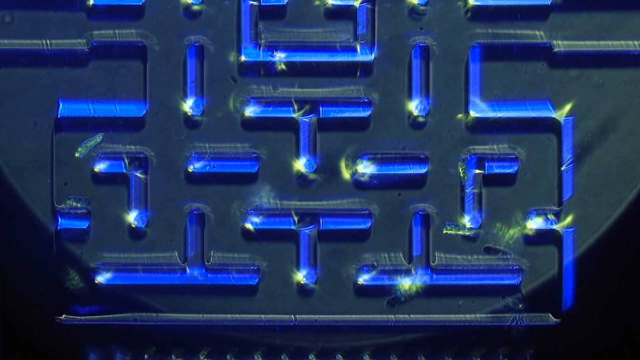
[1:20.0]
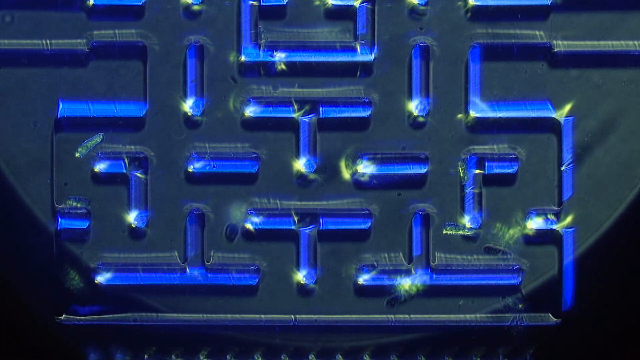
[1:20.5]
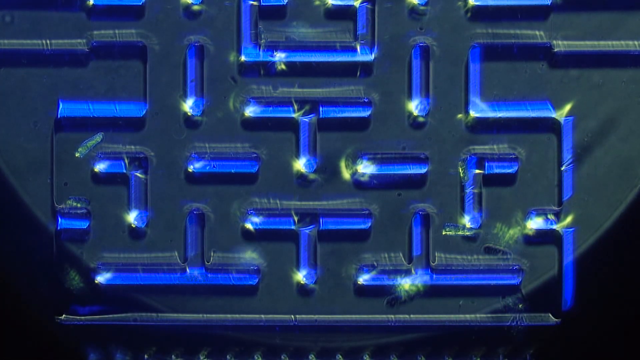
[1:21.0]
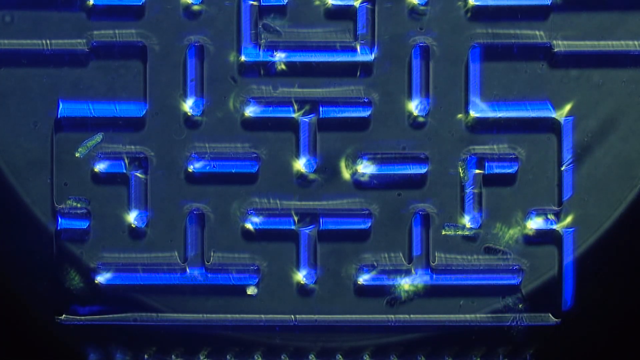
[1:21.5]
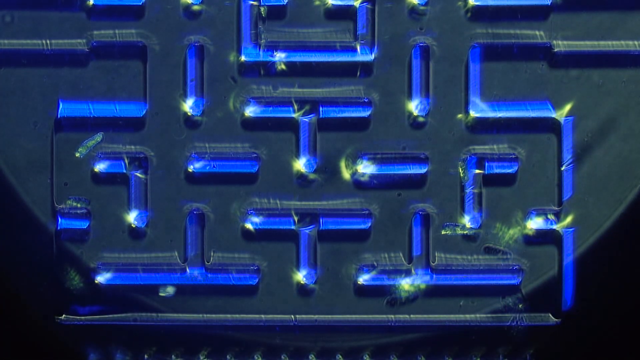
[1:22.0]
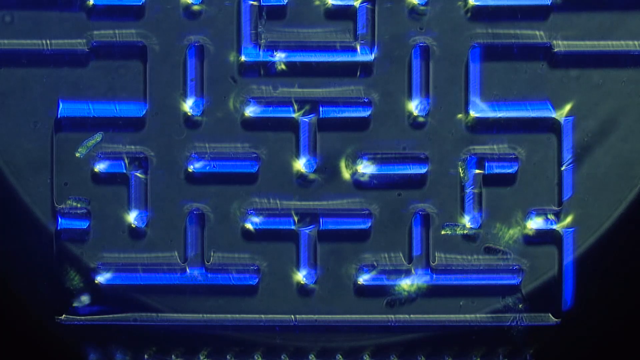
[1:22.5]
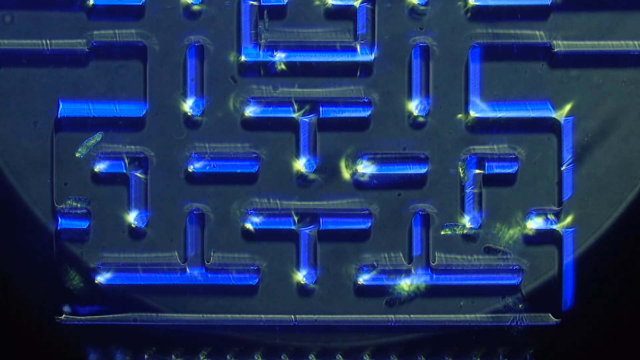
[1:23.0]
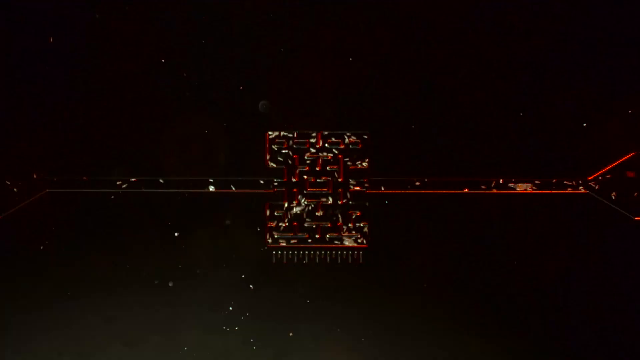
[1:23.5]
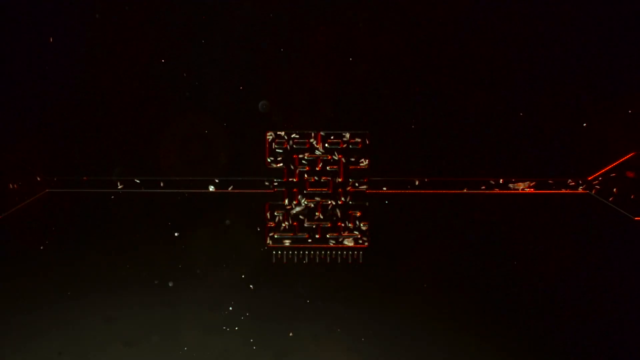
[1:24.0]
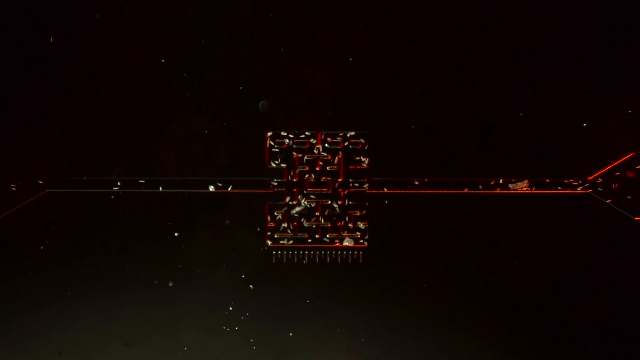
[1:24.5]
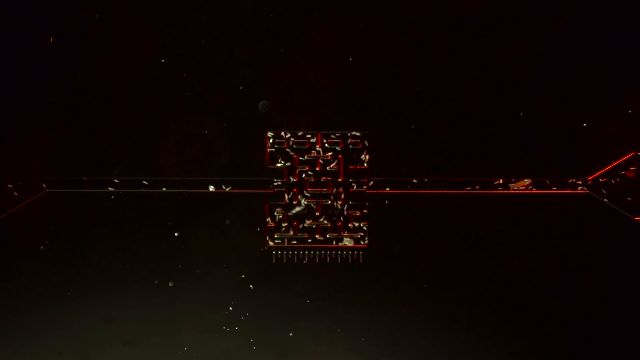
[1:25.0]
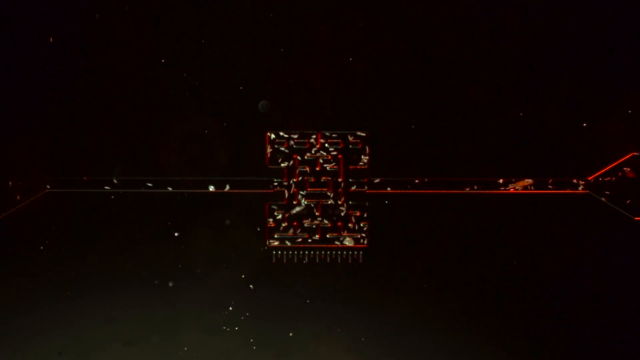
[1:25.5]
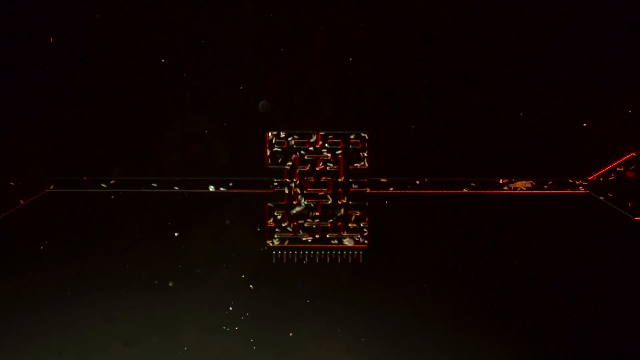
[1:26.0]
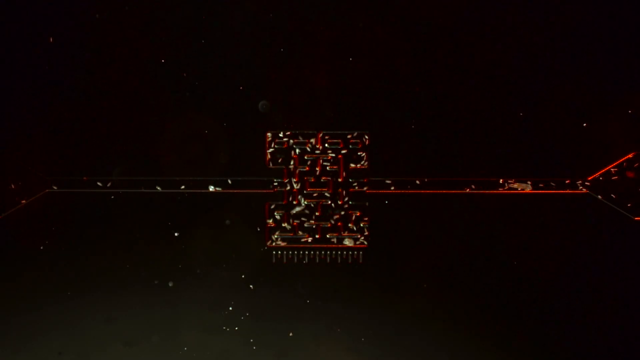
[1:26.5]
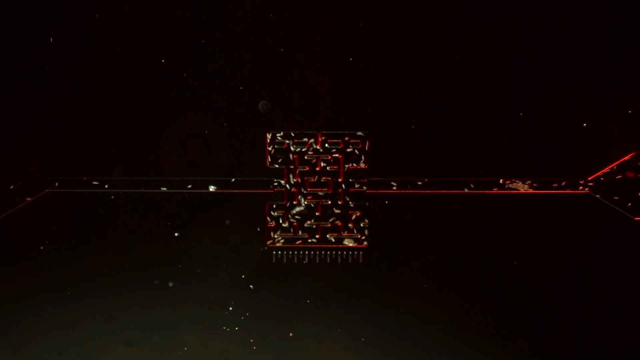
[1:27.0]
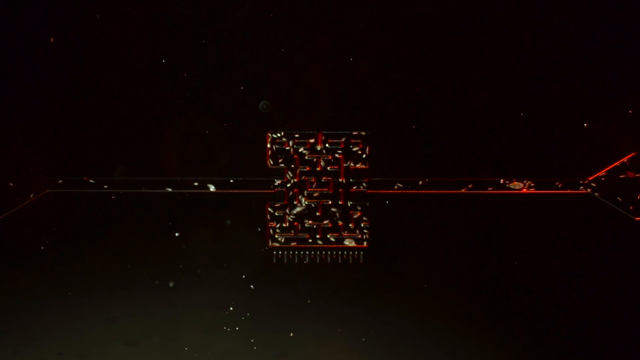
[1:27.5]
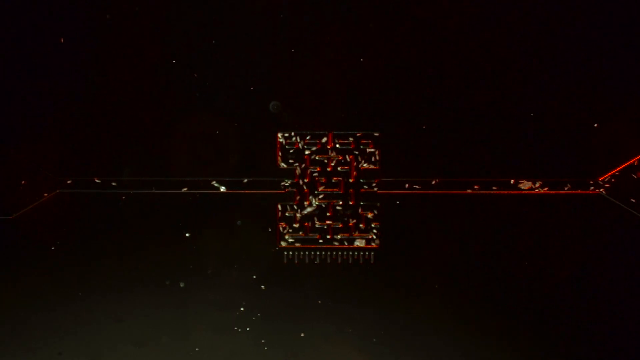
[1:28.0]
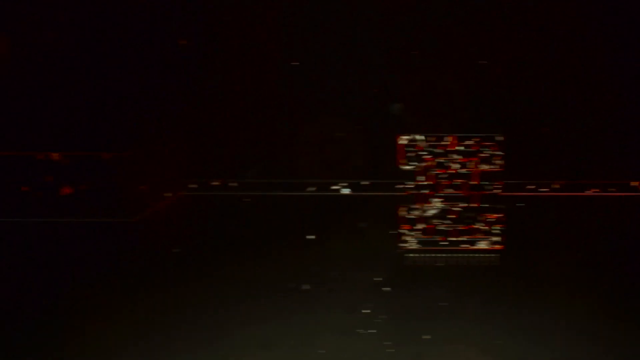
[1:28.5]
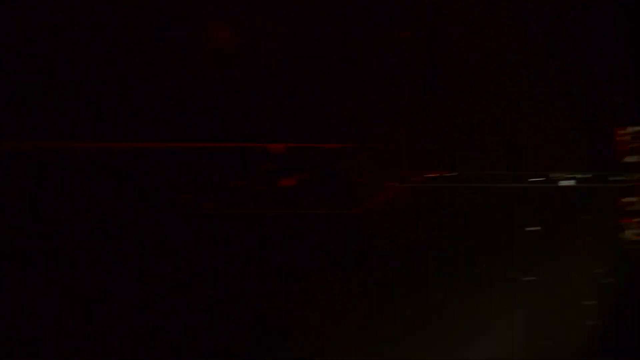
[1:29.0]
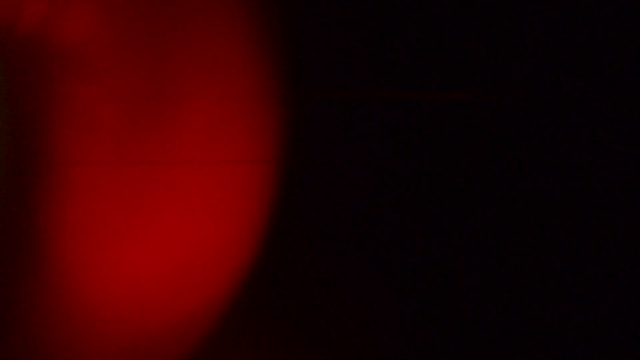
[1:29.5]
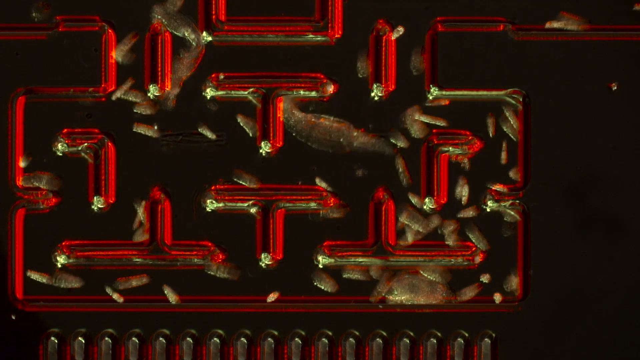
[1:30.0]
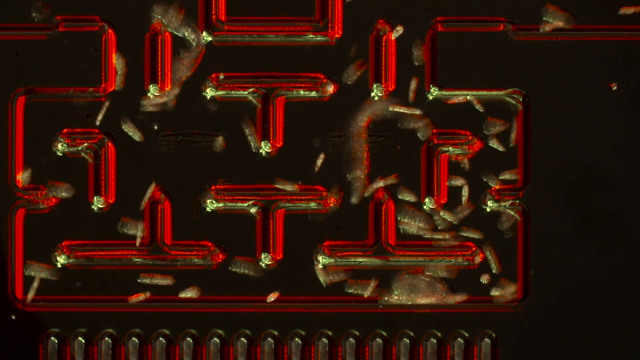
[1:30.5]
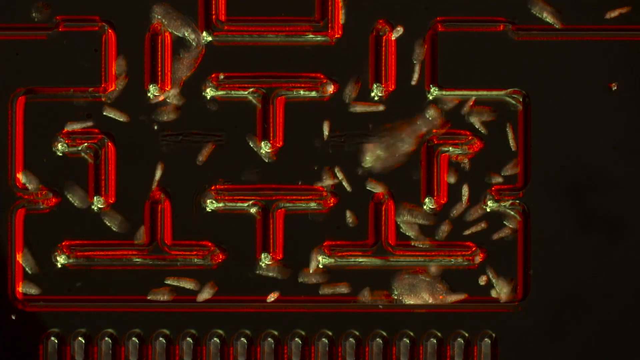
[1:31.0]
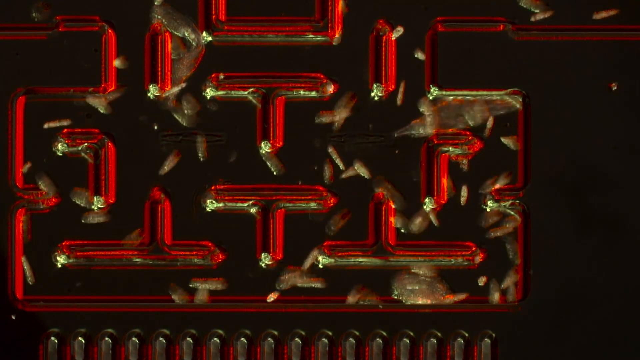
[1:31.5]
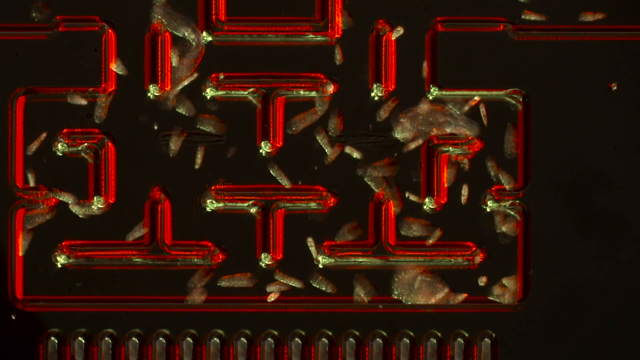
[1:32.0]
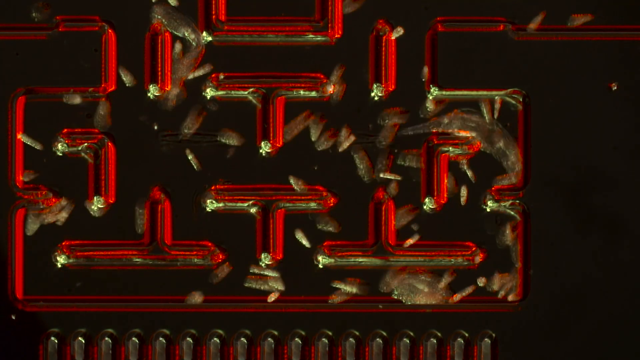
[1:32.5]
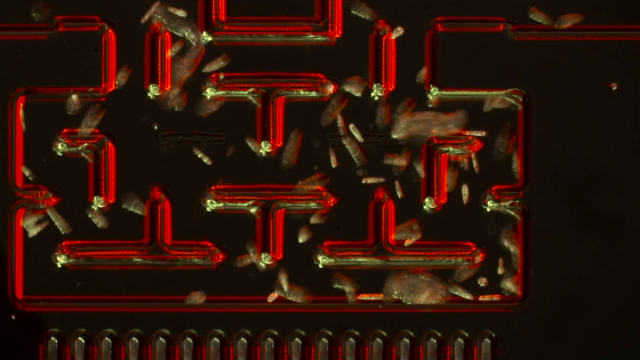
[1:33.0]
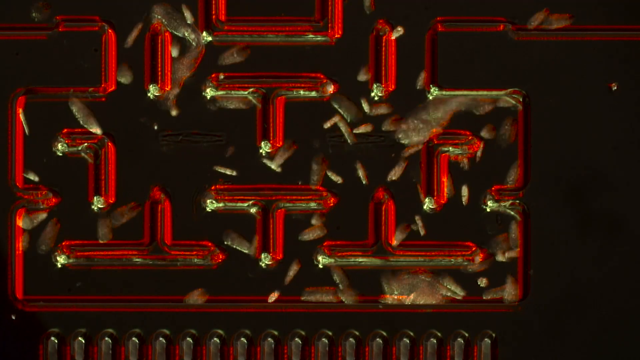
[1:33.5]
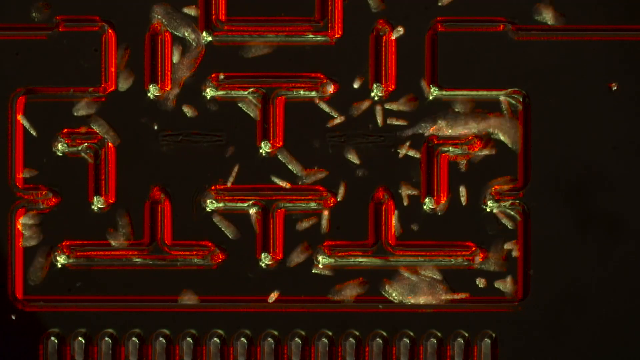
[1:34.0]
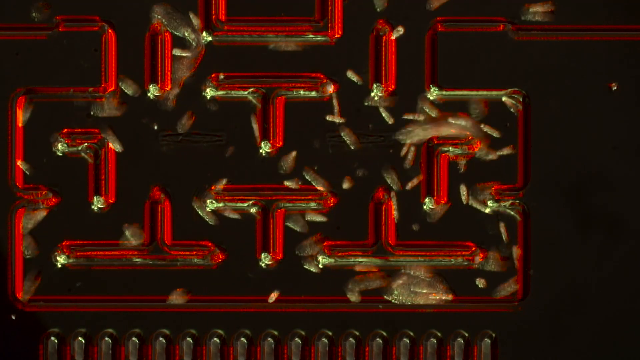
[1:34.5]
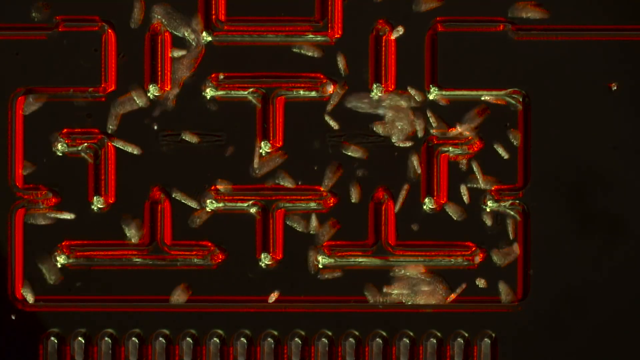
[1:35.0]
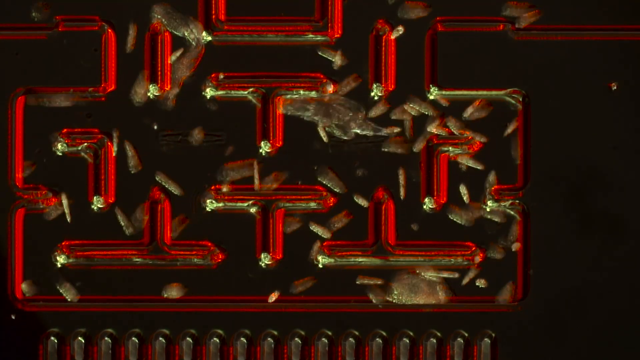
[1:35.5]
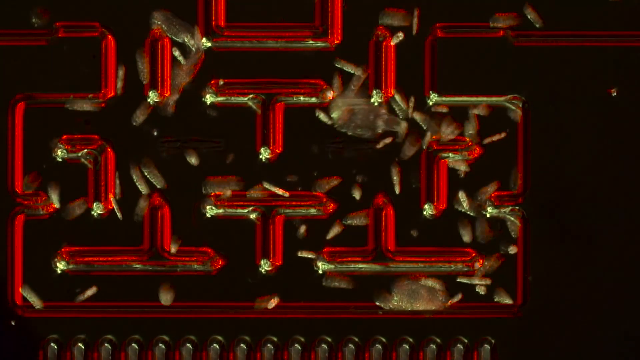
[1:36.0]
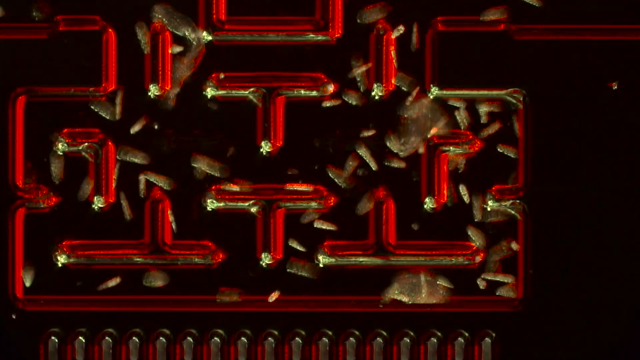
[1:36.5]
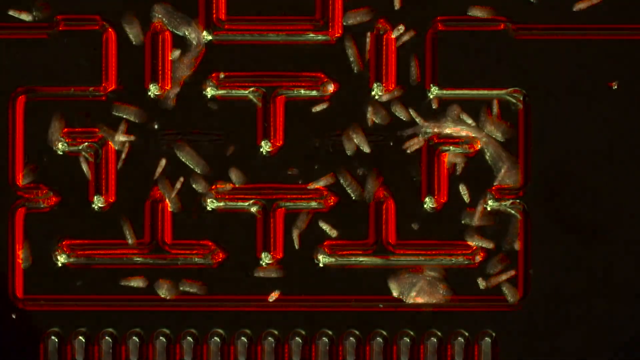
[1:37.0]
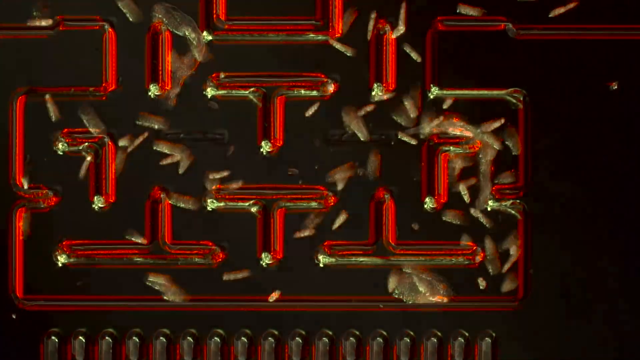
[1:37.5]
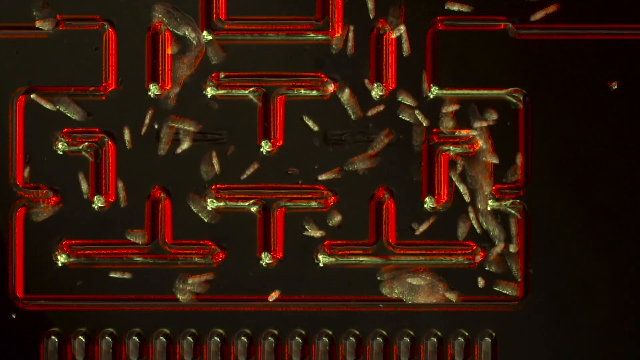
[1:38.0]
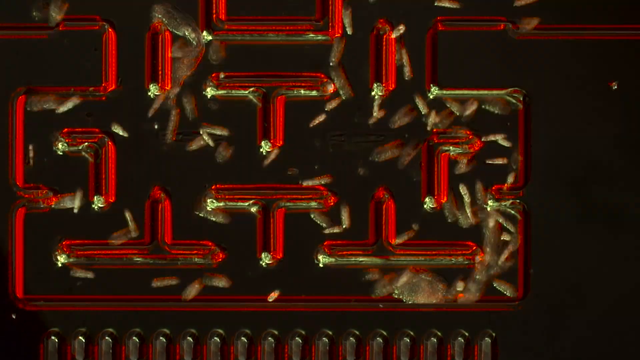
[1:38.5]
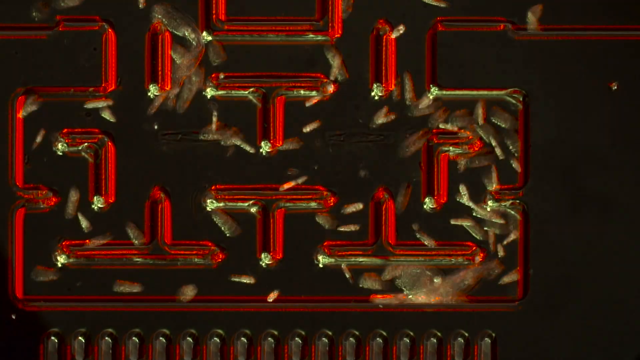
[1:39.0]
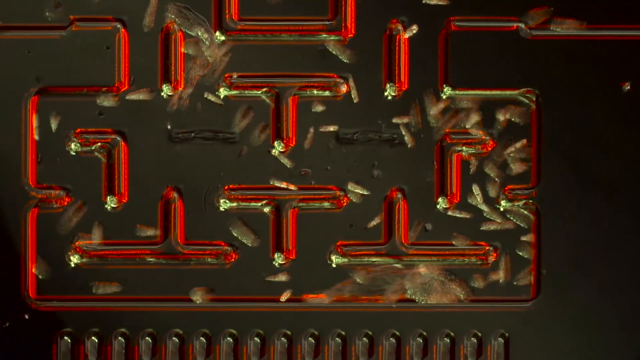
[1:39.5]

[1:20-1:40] The small out-of-focus shape keeps navigating the maze, going down and then right, rounding the corner and attaching to the near wall. It goes left and then makes its way to the bottommost left corner of the maze. The view transitions to another maze with red walls, seen from very far away, showing its two long corridors running off to the left and right. The camera pans left along the corridor, showing a vague dark red shape, then further left until it reaches what appears to be a red spotlight. A transition leads to a more close-up view of the maze, showing many very small shapes and a few larger ones. There are two others, one in the bottom right and another on the right side above it. The upper one seems to be trying to round a corner but seems too big, stretching itself out as it tries to get around. It stops and goes back, then goes right again, this time successfully rounding the corner and going down to the bottom right.